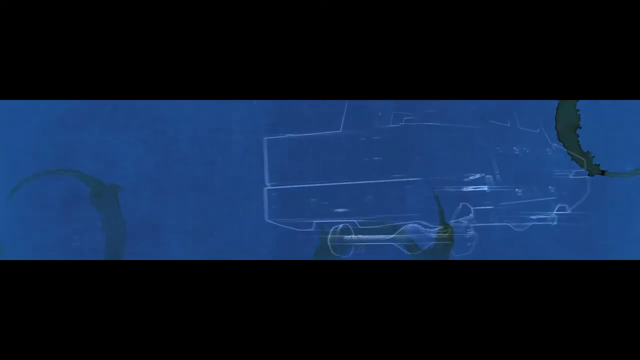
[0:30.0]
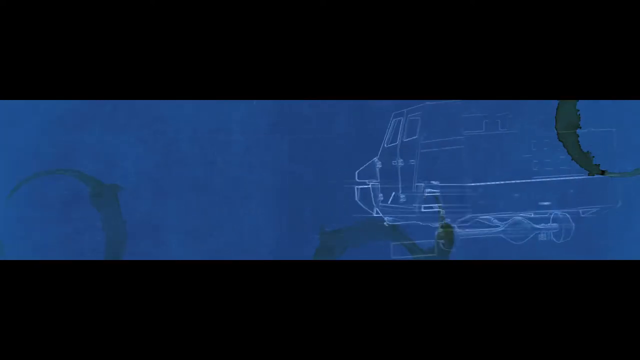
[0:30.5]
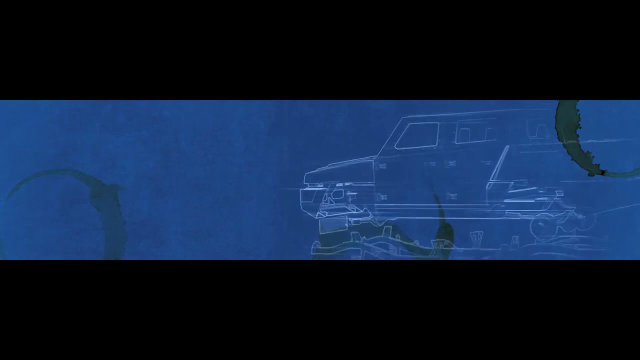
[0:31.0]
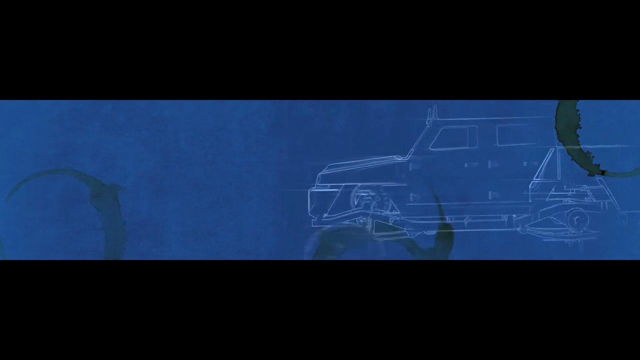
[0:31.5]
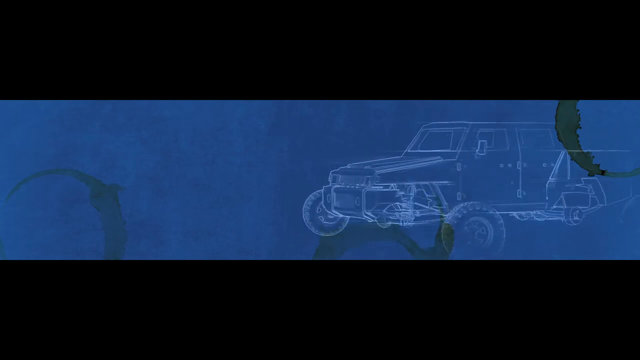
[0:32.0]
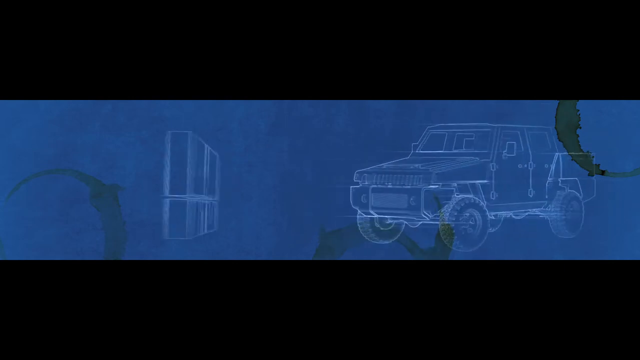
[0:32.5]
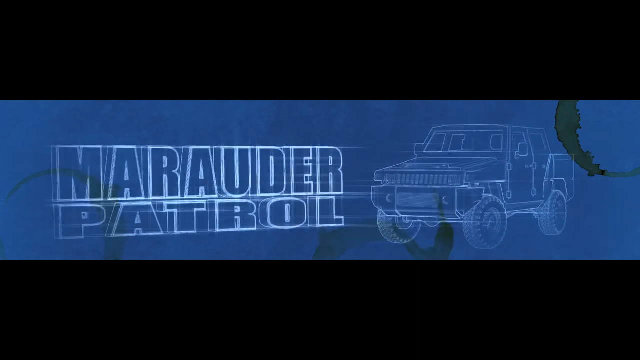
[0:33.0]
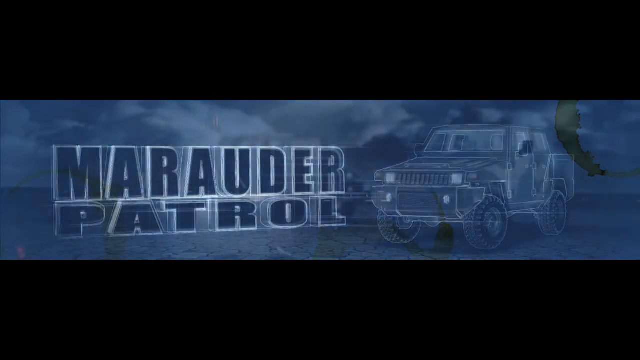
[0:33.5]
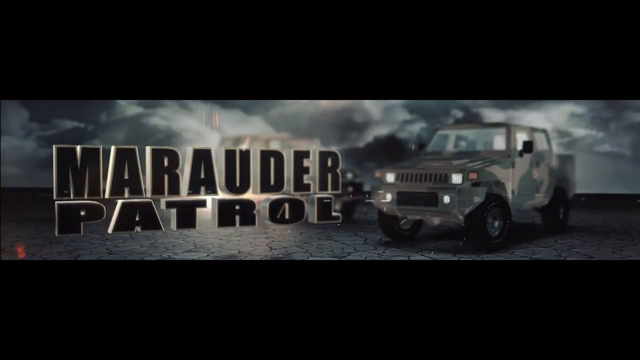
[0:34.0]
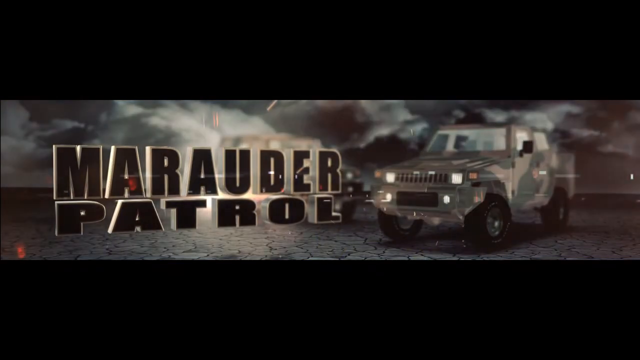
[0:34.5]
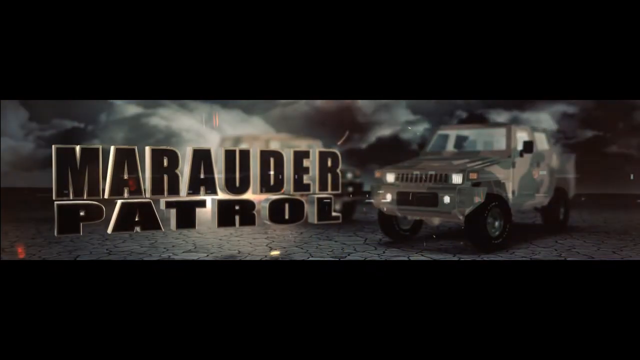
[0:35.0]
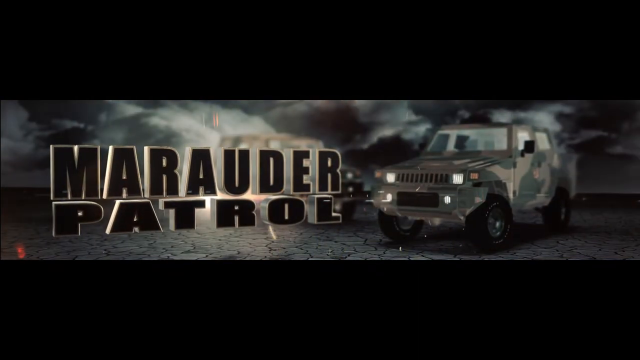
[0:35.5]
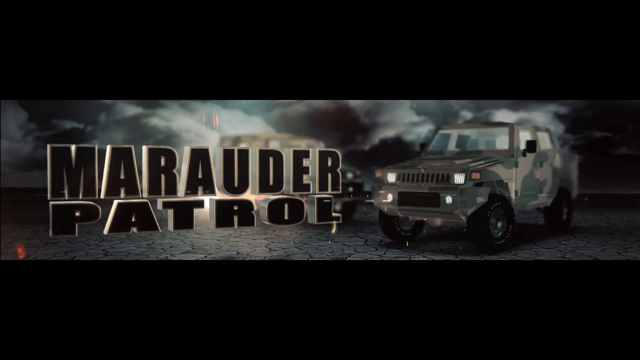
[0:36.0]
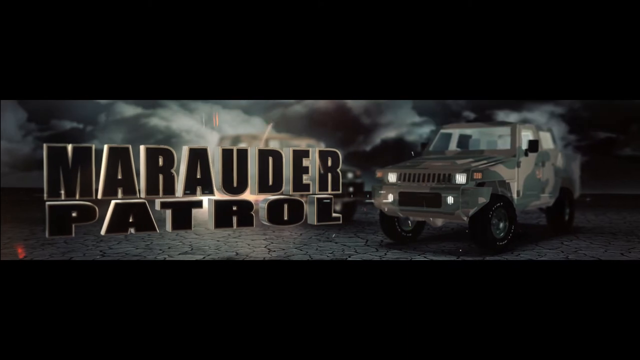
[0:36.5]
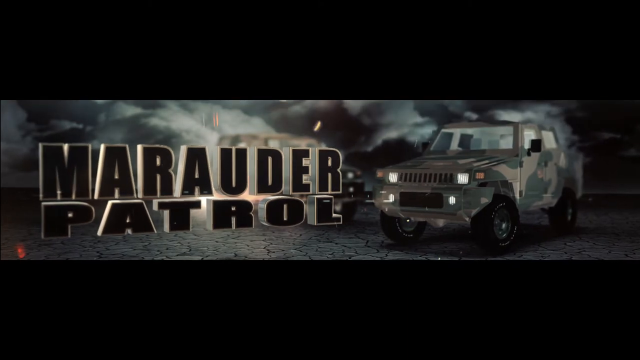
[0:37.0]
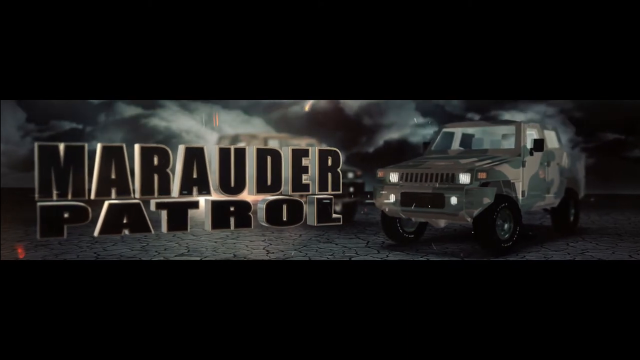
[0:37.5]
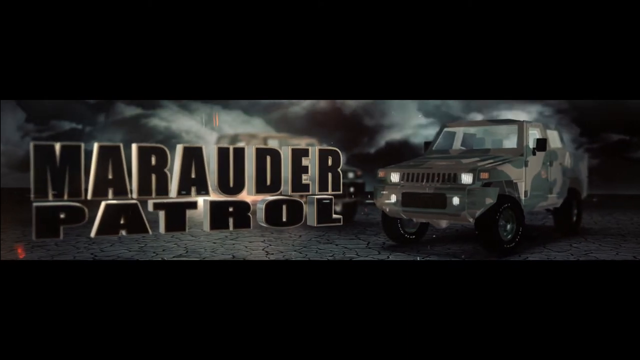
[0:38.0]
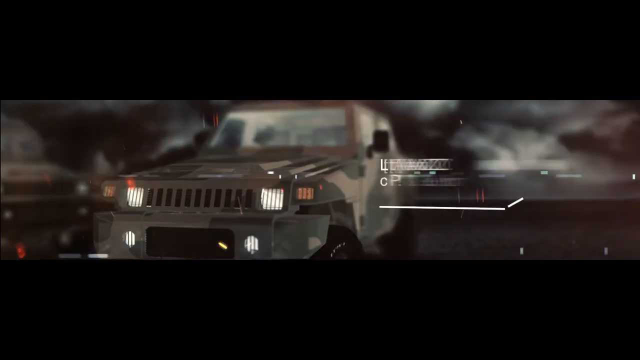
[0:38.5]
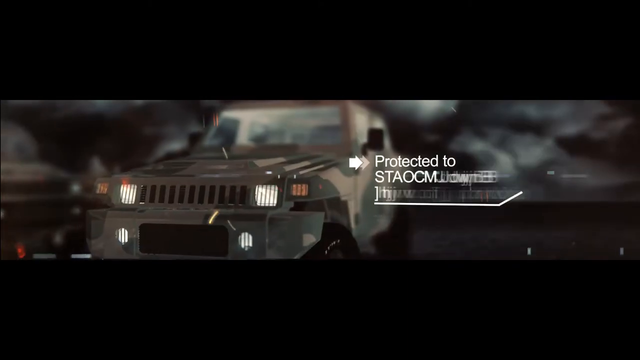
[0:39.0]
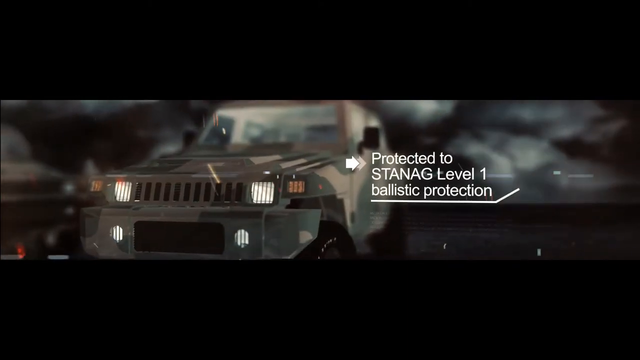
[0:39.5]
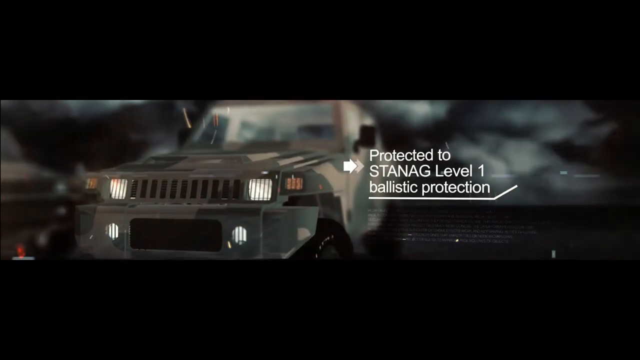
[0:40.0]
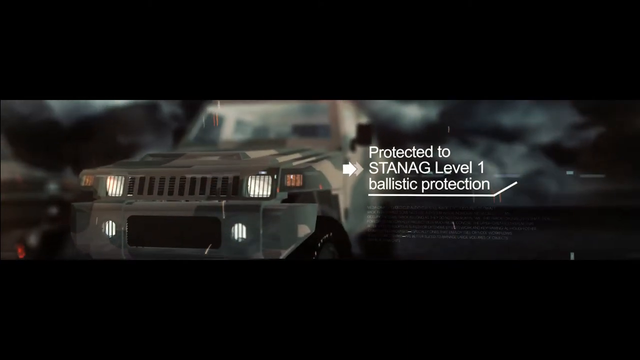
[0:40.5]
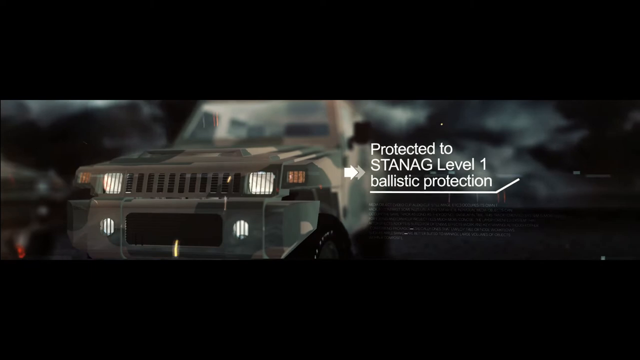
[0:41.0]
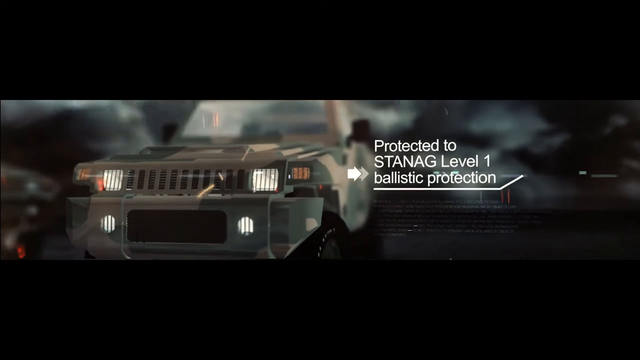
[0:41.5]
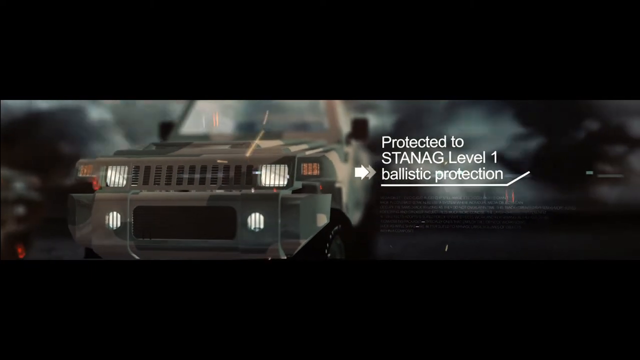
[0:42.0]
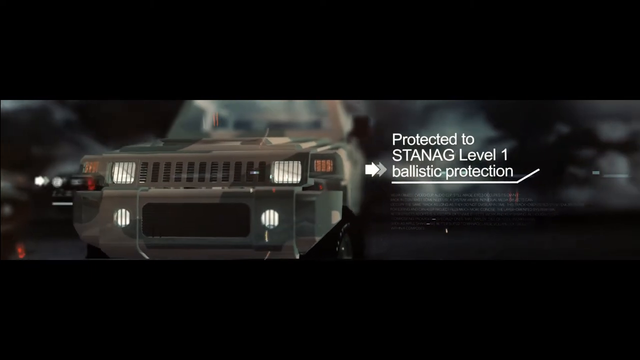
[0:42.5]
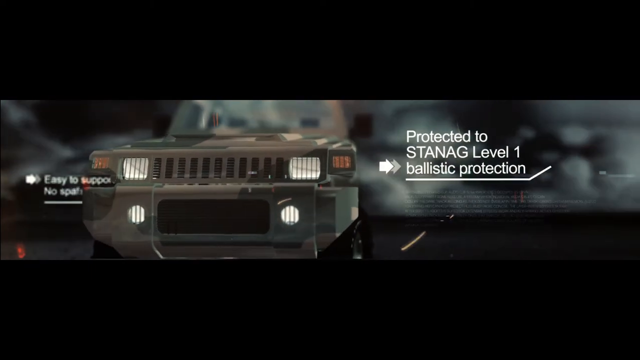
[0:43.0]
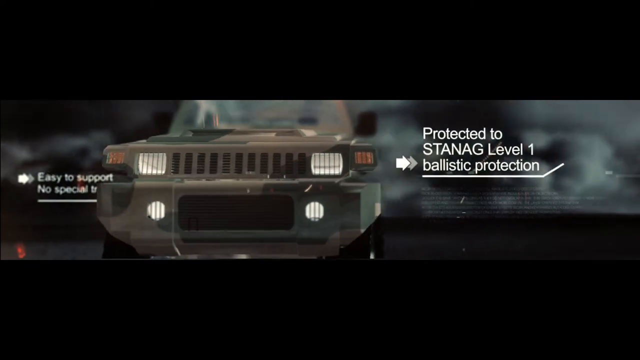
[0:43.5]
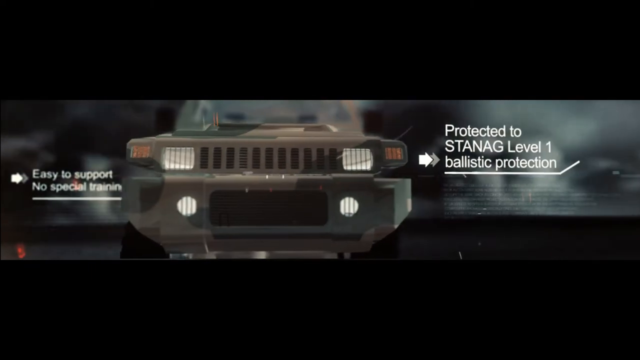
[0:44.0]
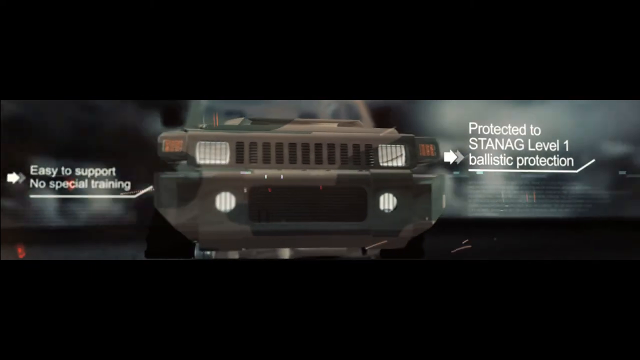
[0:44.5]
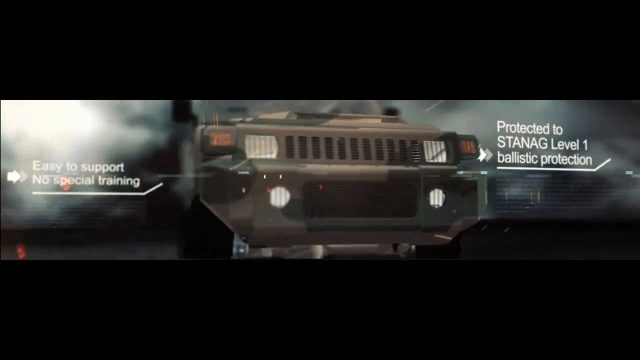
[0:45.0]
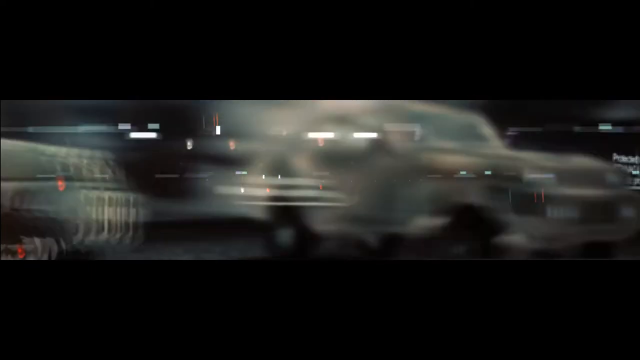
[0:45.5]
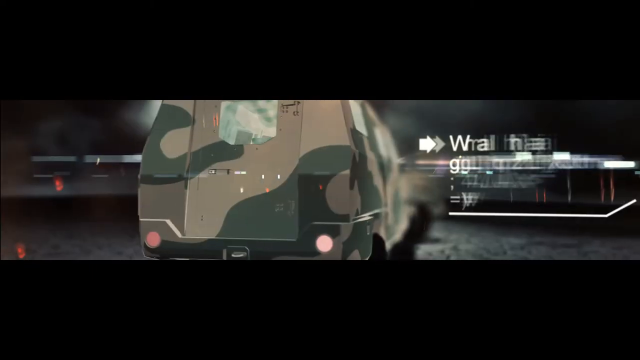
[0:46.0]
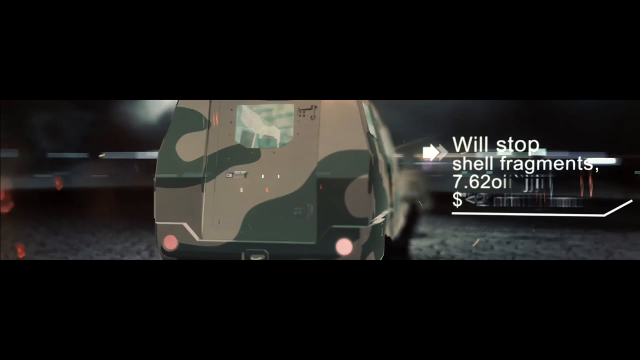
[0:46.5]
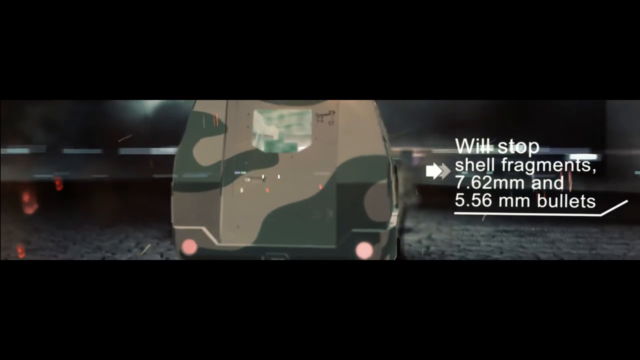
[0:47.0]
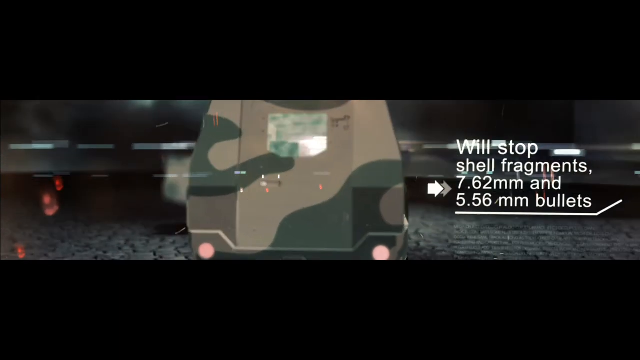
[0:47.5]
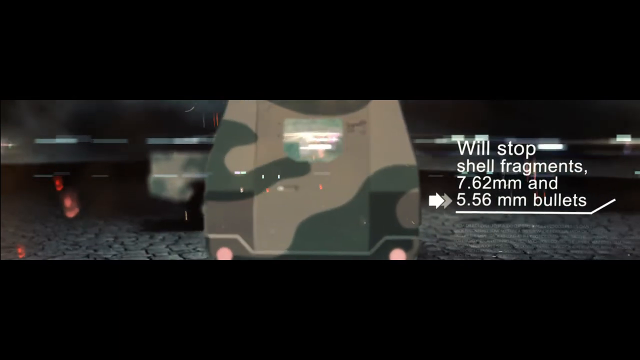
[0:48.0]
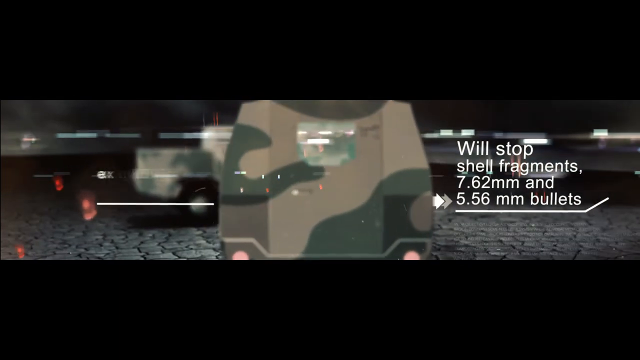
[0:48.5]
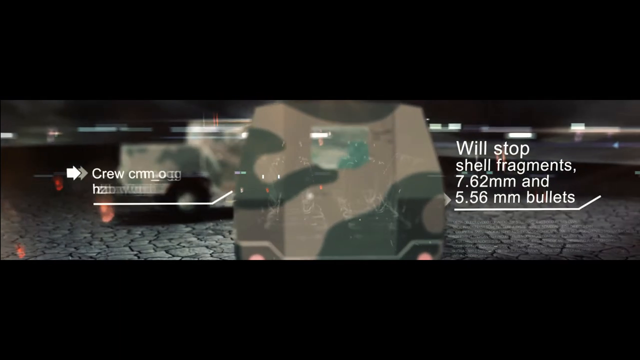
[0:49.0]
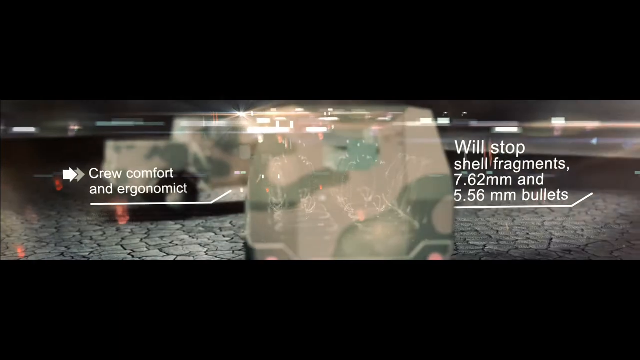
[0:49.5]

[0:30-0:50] The diagram continues, and the text "Marauder Patrol" appears to the left of the diagram of the car. The diagram turns into a colored version with camo coloring, with a storm and lightning in the background. The view zooms into the front of the car, and text reads "Protected to STANAG Level 1 Ballistic Protection." It keeps zooming in, slowly shifting to the left and downward. It then moves to the tires with the text "Easy to support, no special training." Next it goes toward the back, where there is a door instead of a trunk, and the text reads "We'll stop shell fragments, 7.62mm and 5.56mm bullets." Then the text "Crew comfort and ergonomics" appears. The vehicle is probably a military-based car.